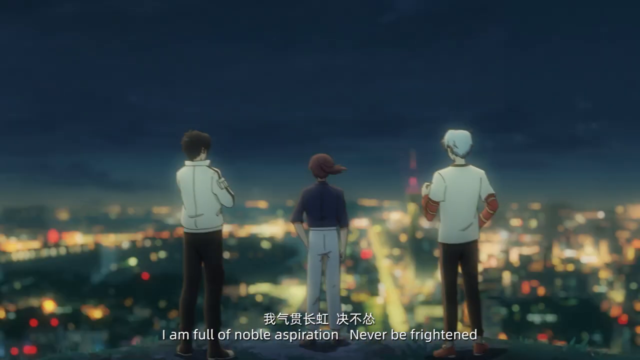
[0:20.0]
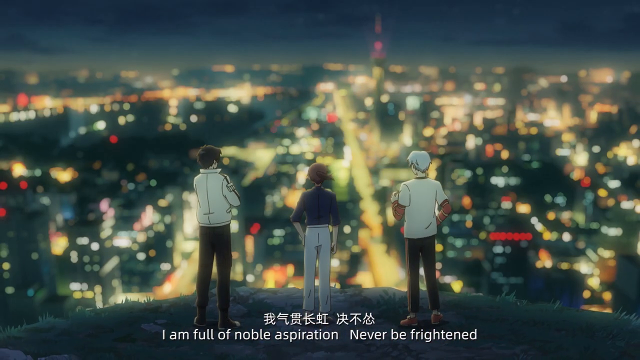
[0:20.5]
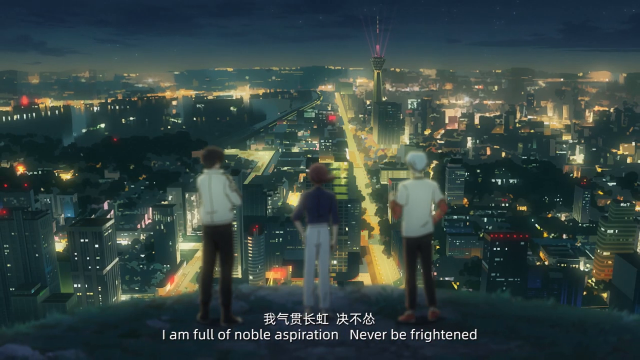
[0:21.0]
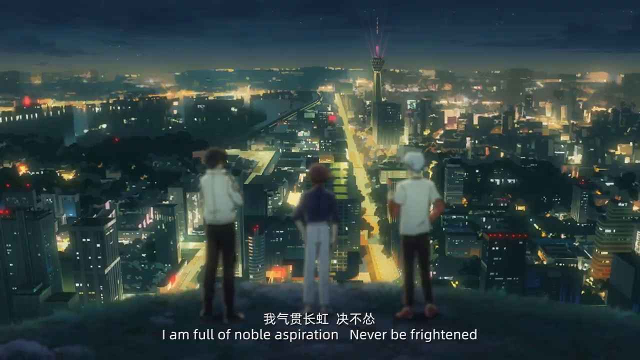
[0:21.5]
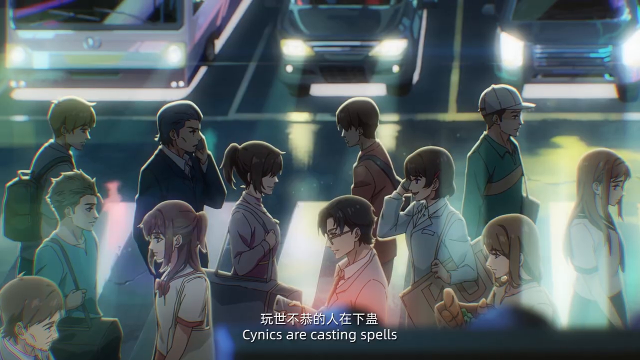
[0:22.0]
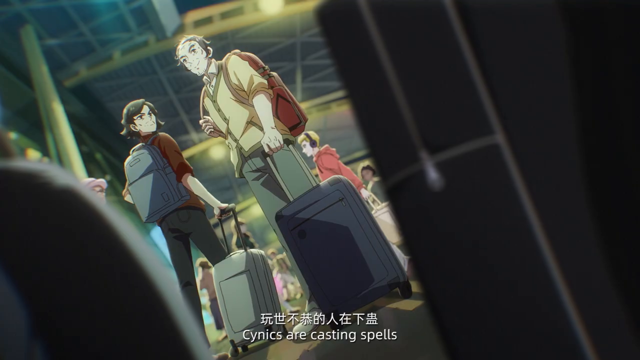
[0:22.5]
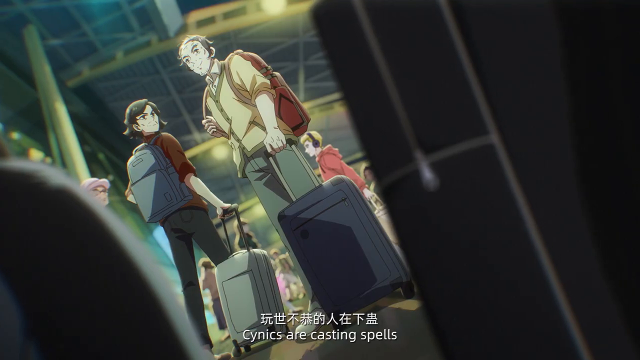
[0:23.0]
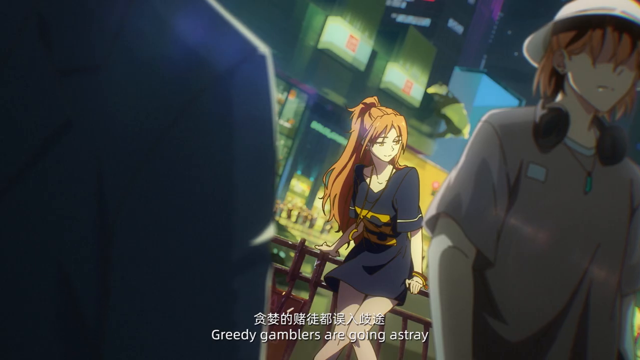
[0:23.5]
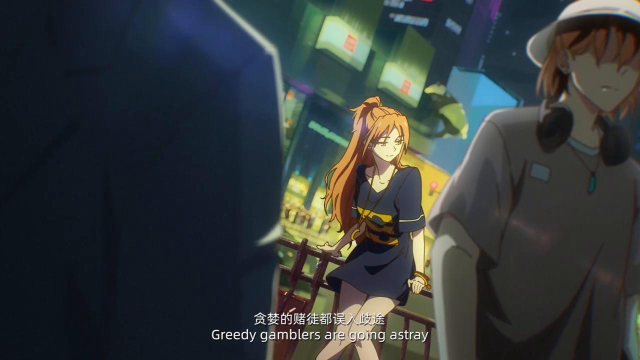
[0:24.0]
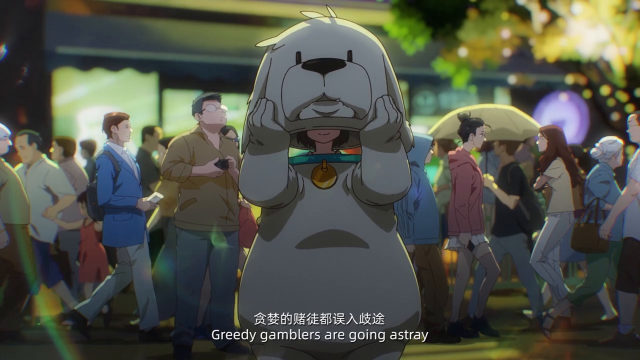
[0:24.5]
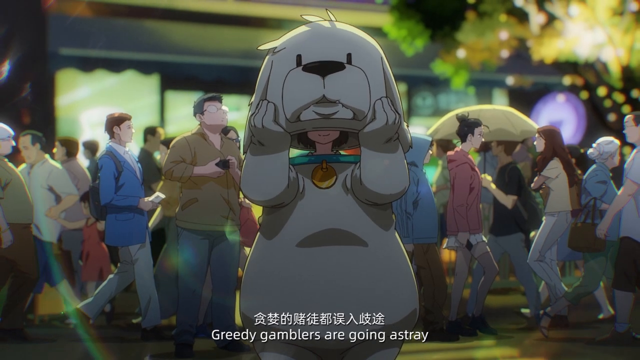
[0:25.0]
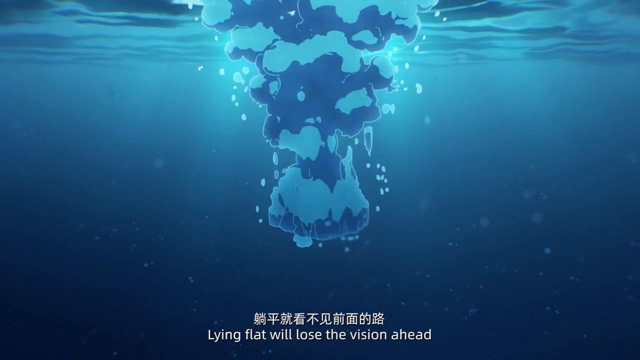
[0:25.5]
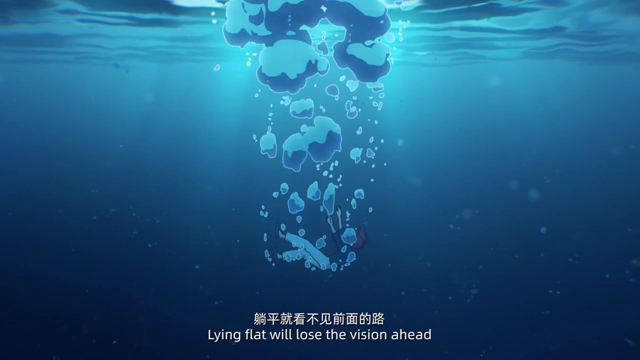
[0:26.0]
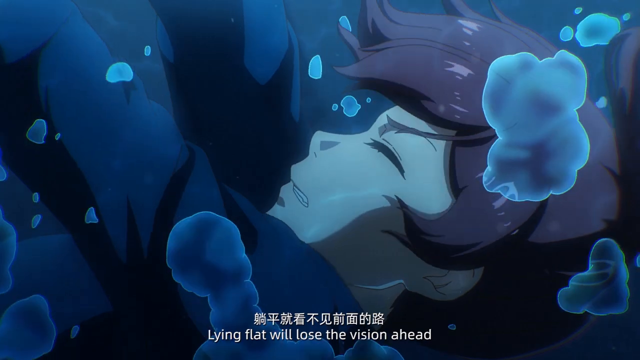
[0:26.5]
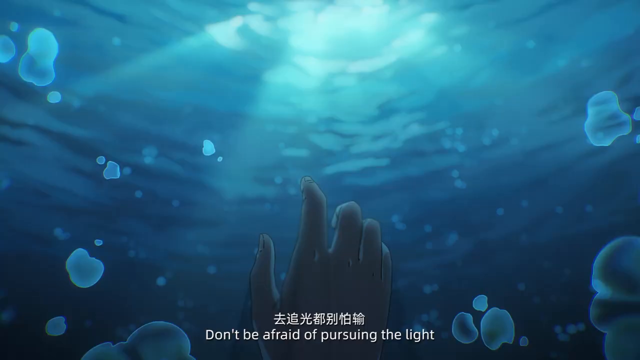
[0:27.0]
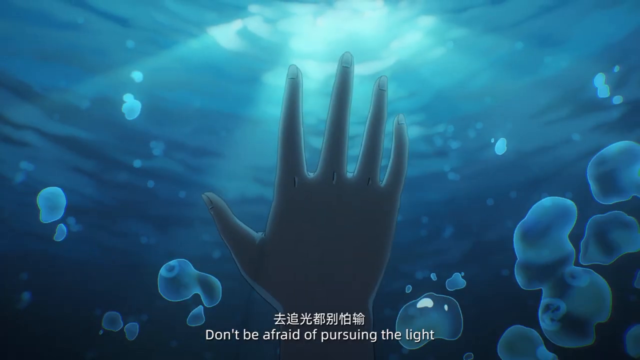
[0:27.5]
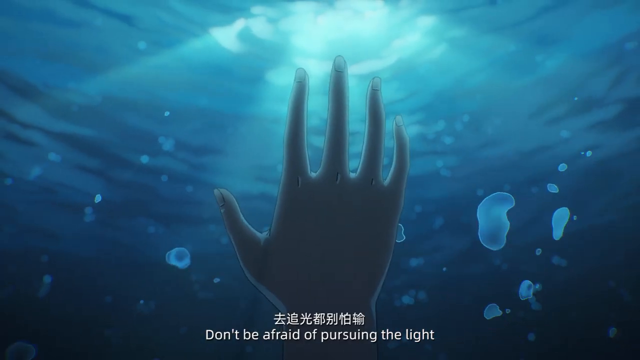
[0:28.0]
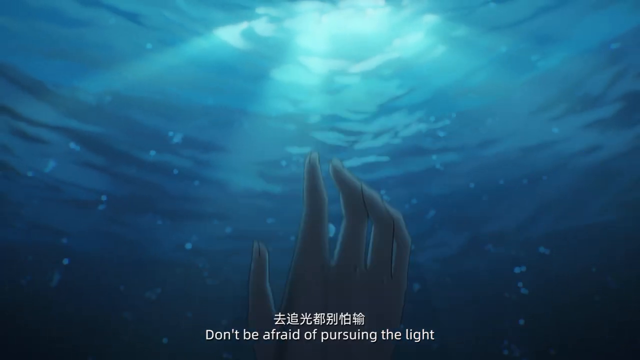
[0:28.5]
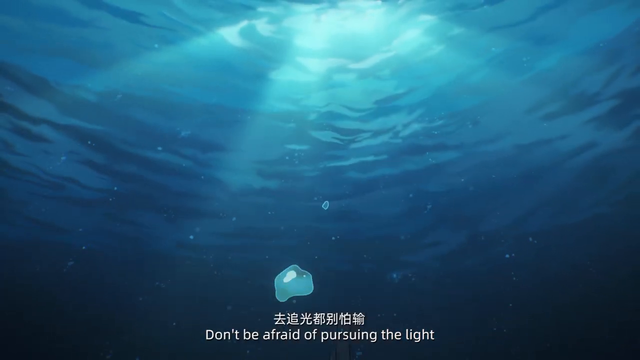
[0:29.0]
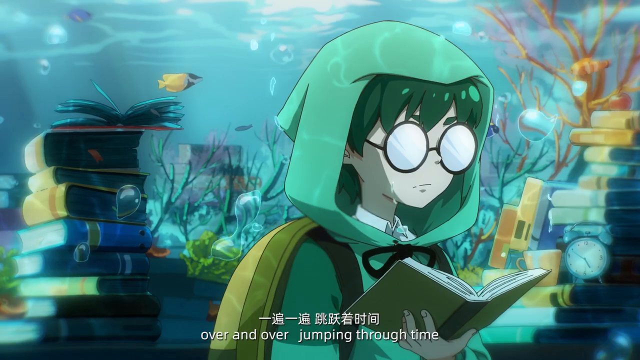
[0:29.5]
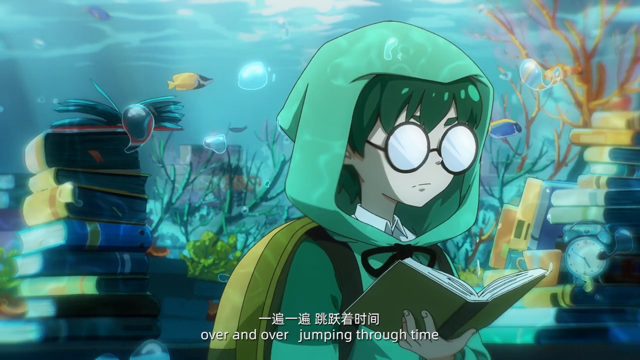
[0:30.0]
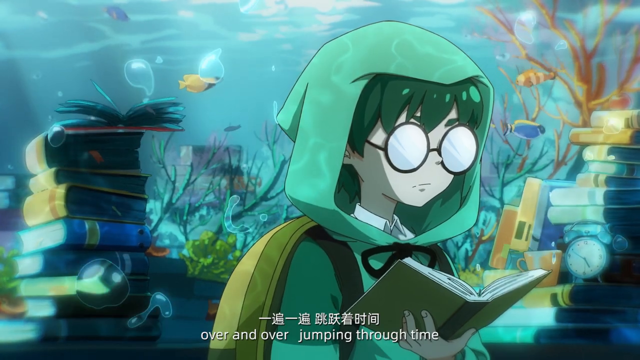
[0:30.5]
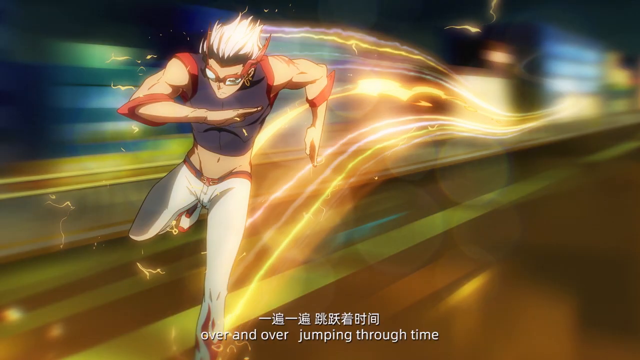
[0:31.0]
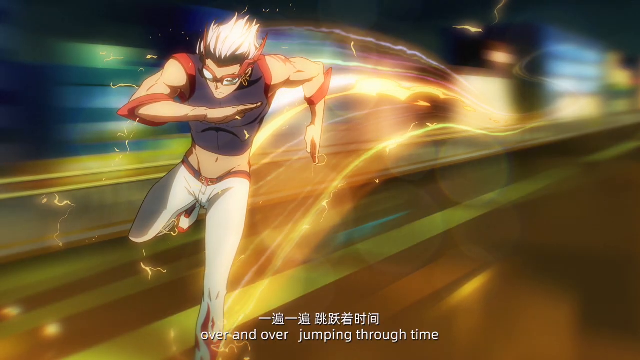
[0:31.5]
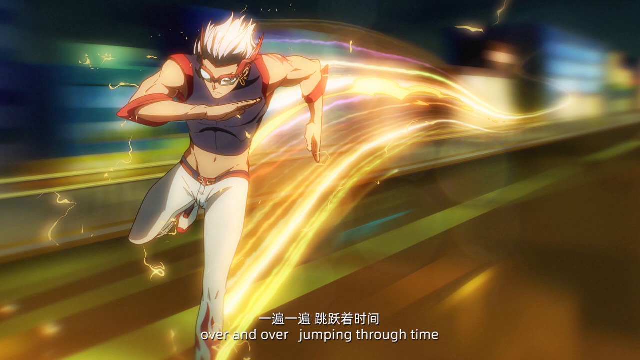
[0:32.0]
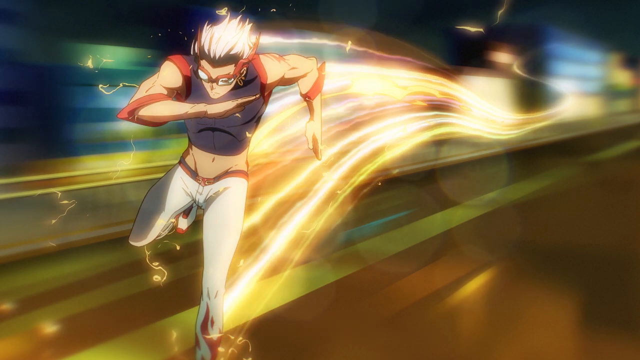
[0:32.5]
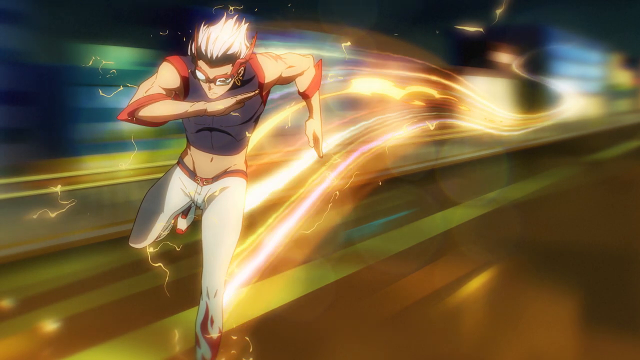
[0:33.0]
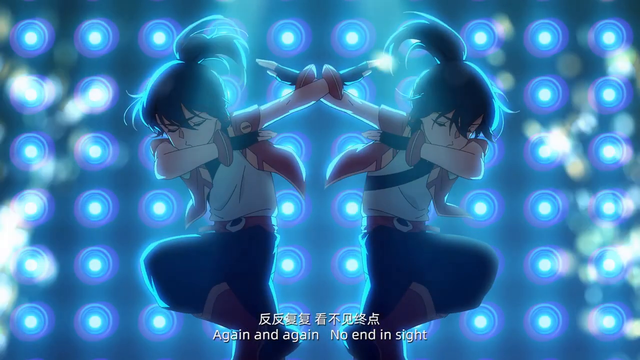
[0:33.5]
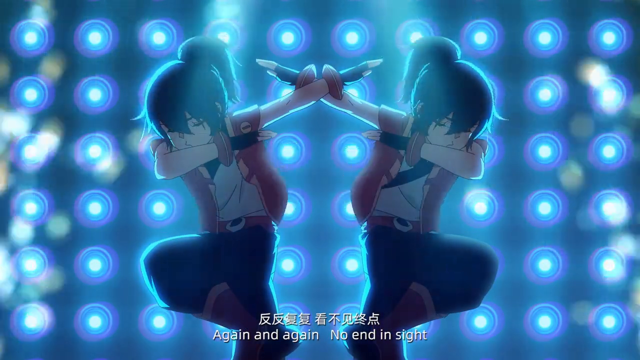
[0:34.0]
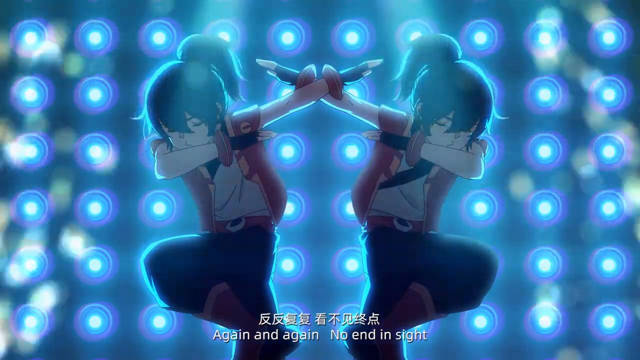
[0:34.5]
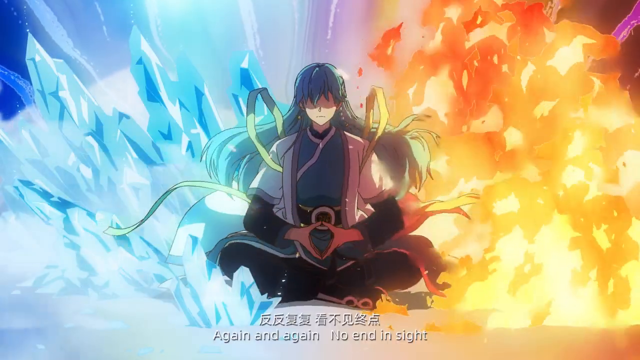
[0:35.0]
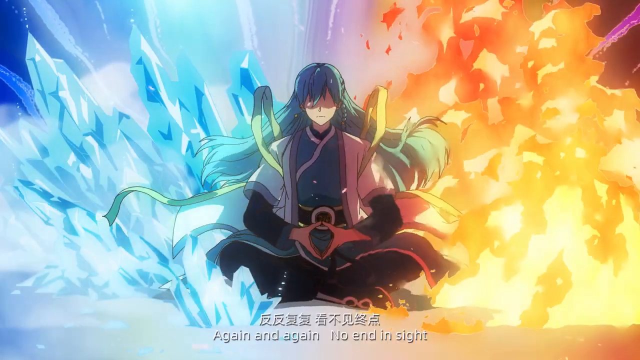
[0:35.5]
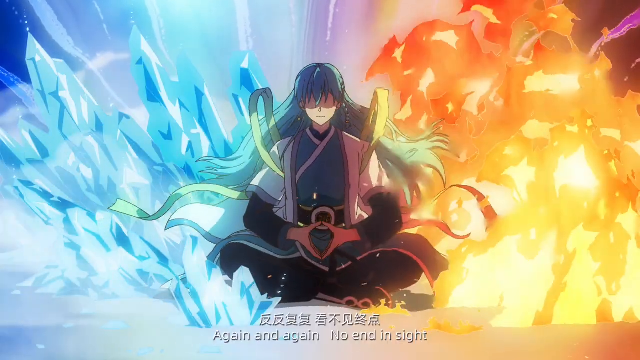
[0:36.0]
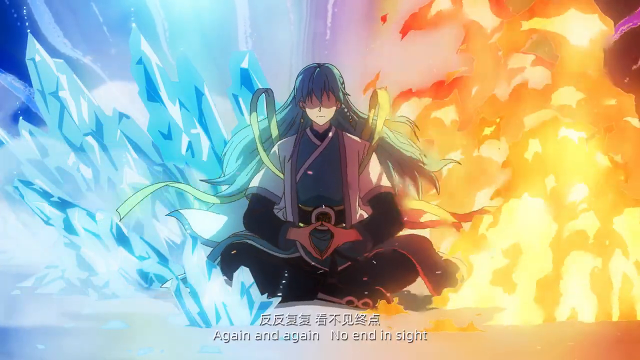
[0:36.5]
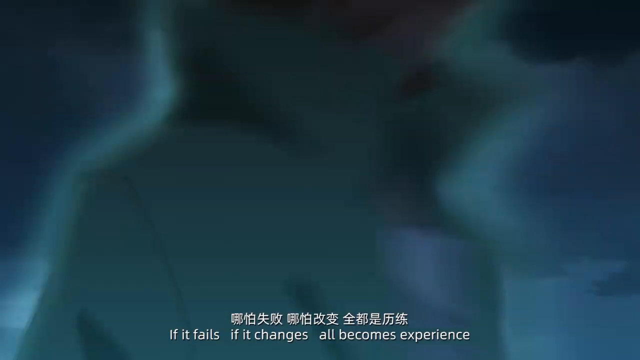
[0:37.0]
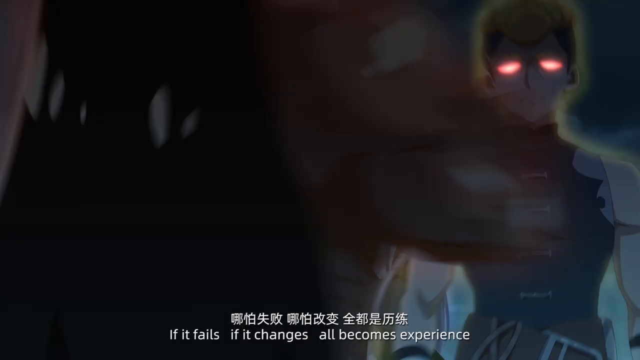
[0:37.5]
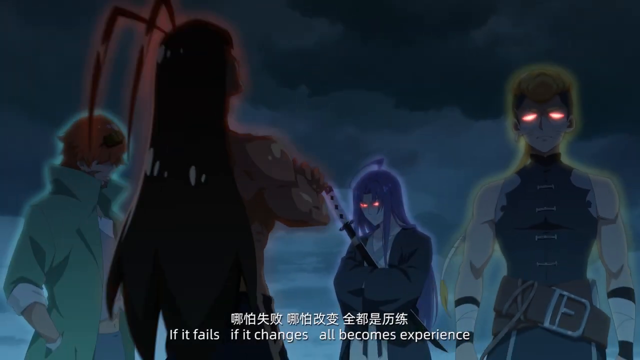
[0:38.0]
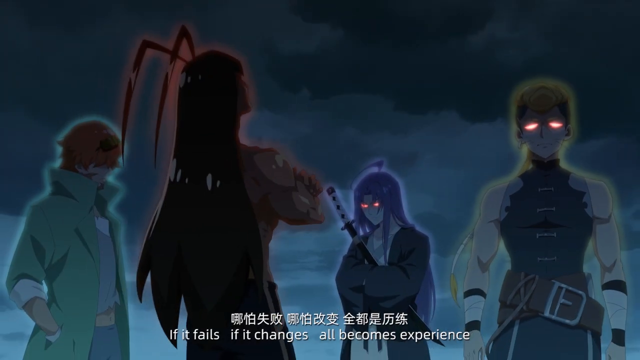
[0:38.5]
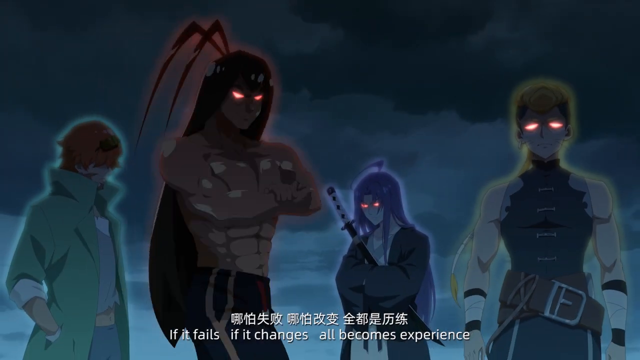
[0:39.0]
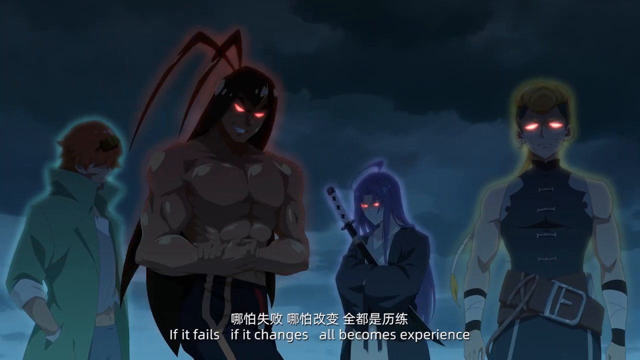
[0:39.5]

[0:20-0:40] Many anime images go by very quickly in what appears to be an anime opening, with occasional subtitles for song lyrics at the bottom. It starts with three people seen from behind, looking over a cityscape at night. A city street follows, with people walking in different directions across a crosswalk while cars wait, their headlights reflecting off the street as if it is a little wet. Two people with roller suitcases look behind them, seen through two other suitcases. A woman in a blue dress looks through a crowd, and then a mascot dog is about to pull off the head of the costume while several people walk behind him; only one has an umbrella, which is yellow and appears a little see-through. There are some lights in the upper right. The head is lifted further, revealing a little neck and chin, but it is never pulled off completely. An underwater view shows something splashing into the water, but nothing is there when the cloud disperses; then a character is underwater with bubbles rising, presumably the one that fell in. The surface of the water is seen from below with the sun glinting in, and a hand reaches up toward the sun and then withdraws. A character with a green hood and glaring light glasses appears, followed by a character speeding through in slow motion. Two characters who look like twins strike a pose, with several lights in the background and some kind of effect on the sides. A character makes a hand gesture with ice on one side and fire on the other. Three characters, similar to the earlier three and possibly the same, zoom in from the sides and stand with glowing eyes, while a muscular character looks on.